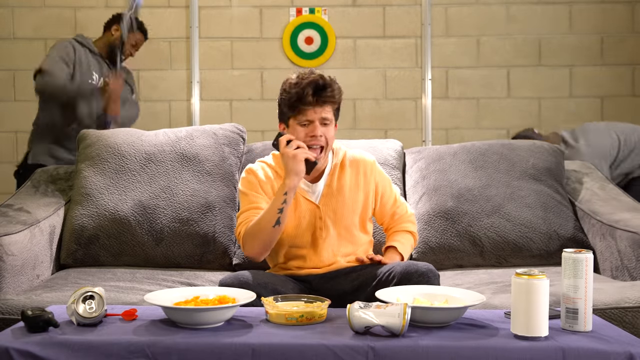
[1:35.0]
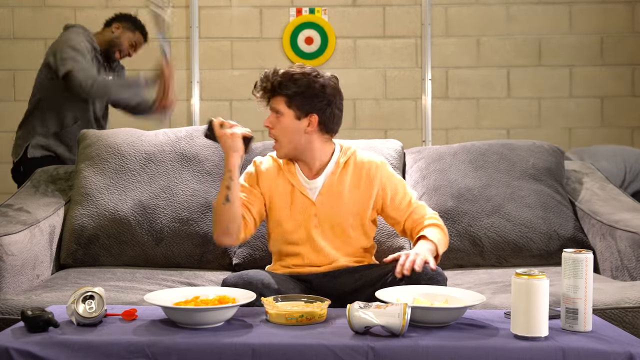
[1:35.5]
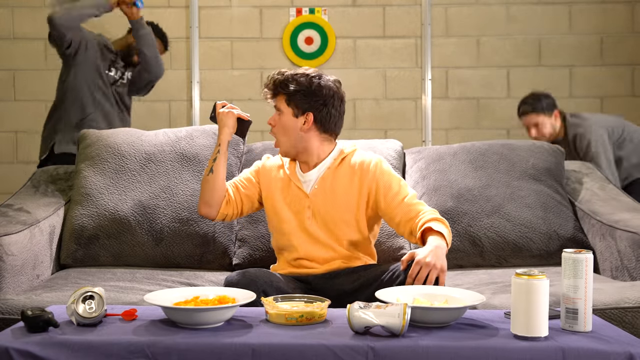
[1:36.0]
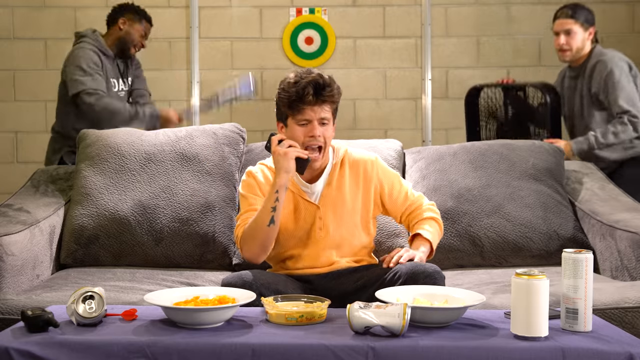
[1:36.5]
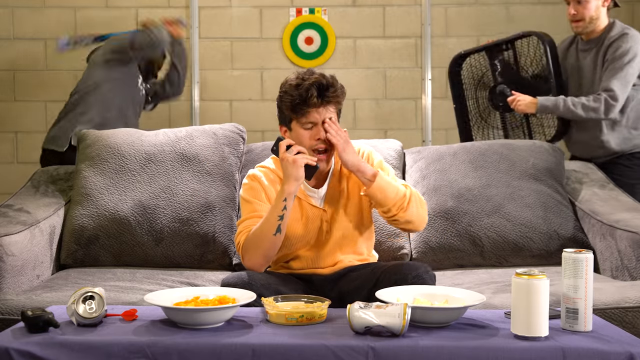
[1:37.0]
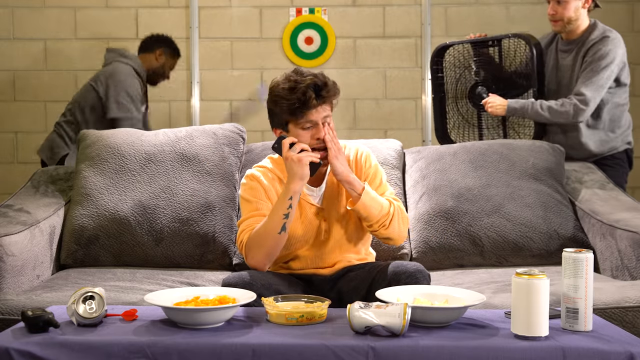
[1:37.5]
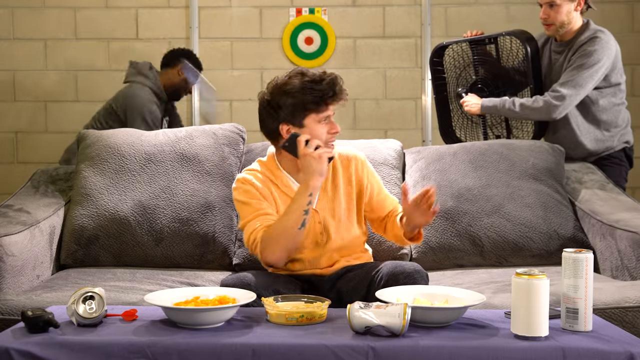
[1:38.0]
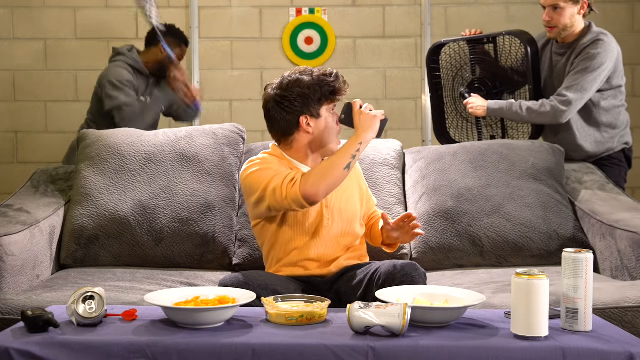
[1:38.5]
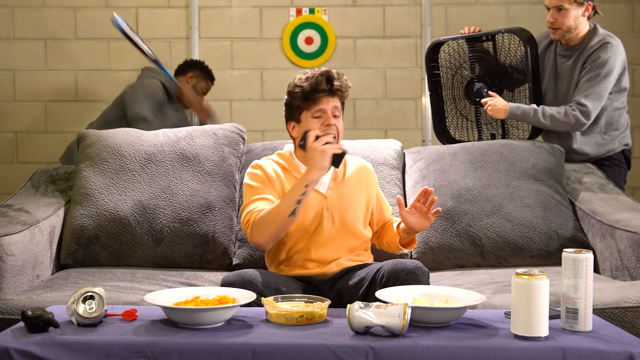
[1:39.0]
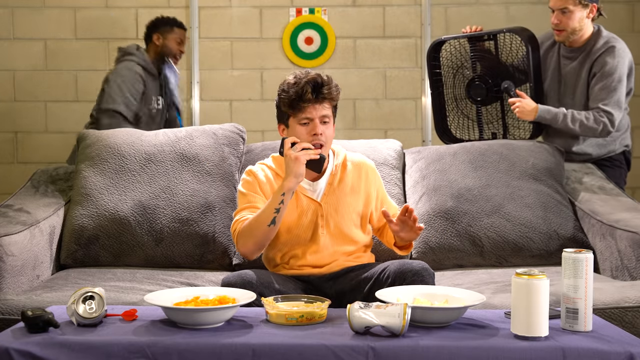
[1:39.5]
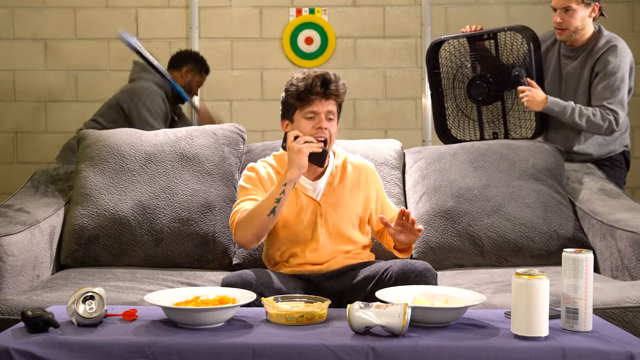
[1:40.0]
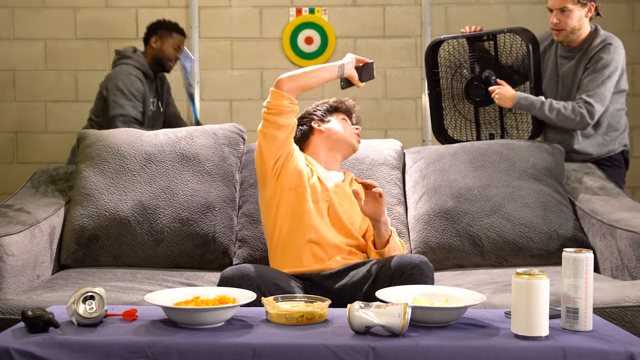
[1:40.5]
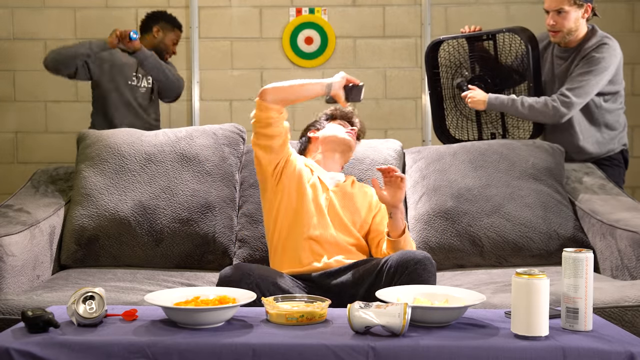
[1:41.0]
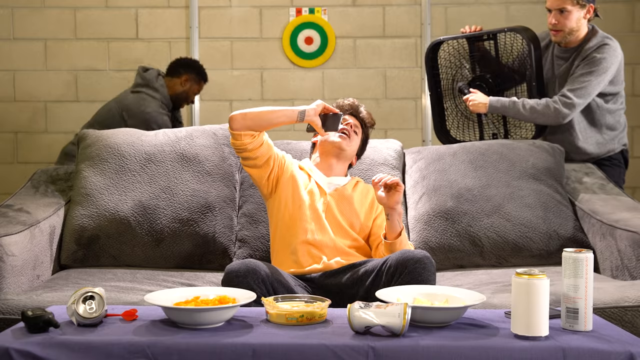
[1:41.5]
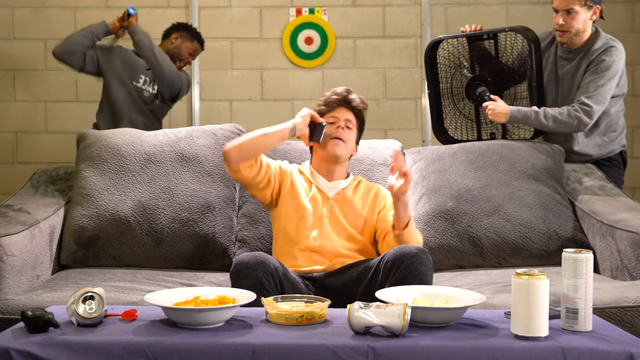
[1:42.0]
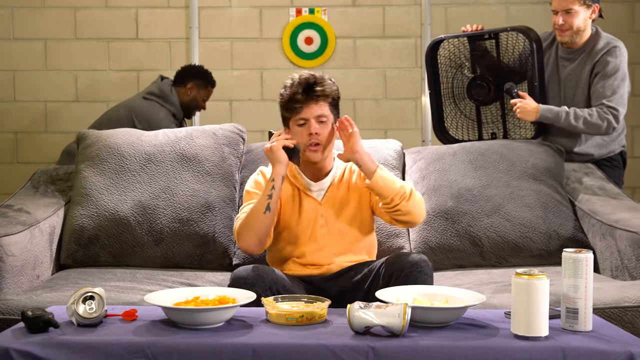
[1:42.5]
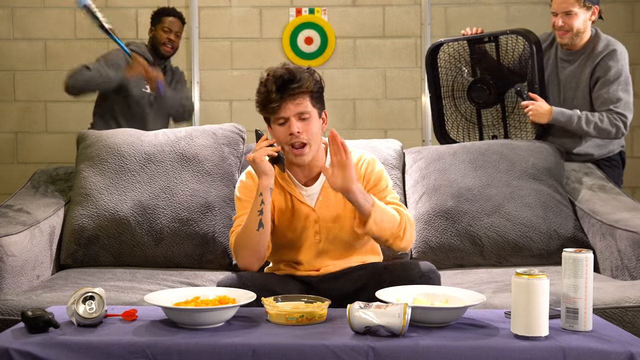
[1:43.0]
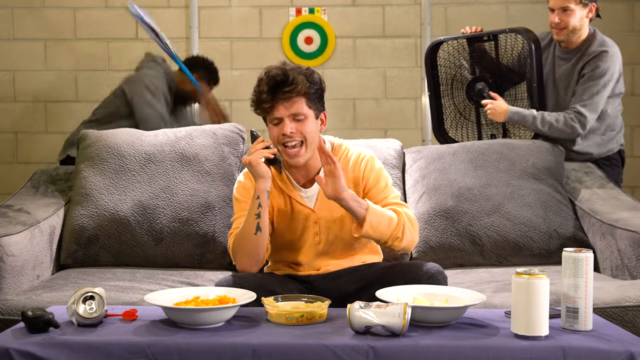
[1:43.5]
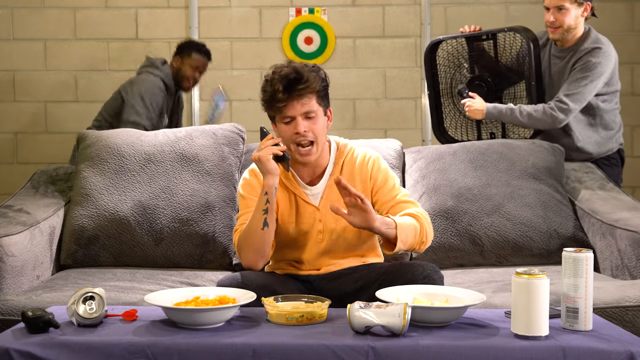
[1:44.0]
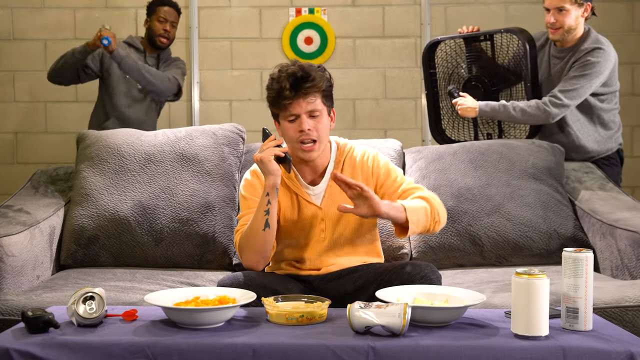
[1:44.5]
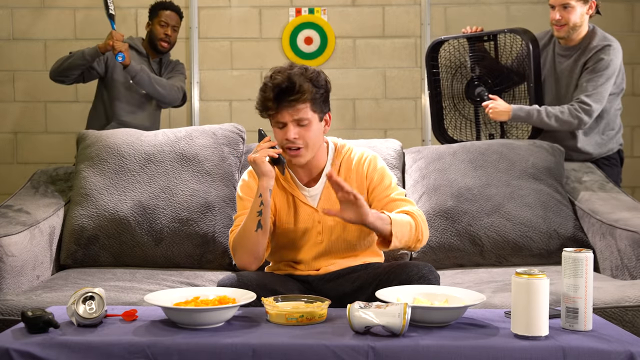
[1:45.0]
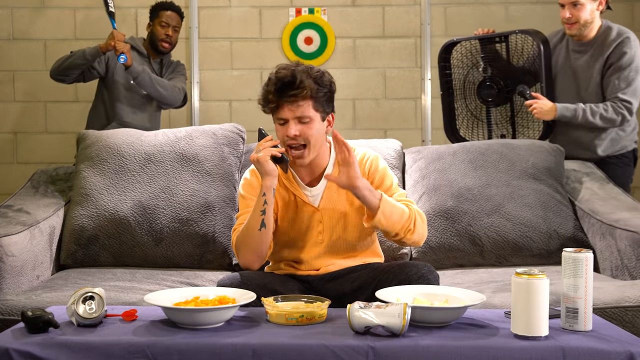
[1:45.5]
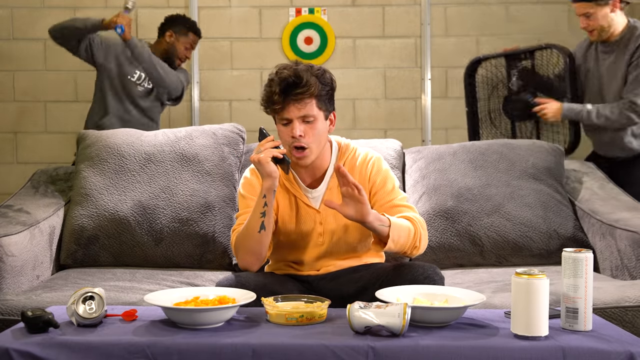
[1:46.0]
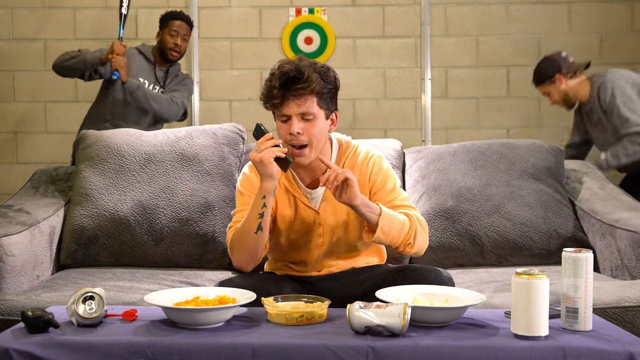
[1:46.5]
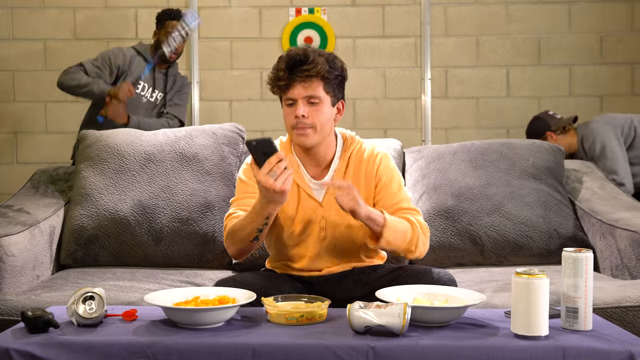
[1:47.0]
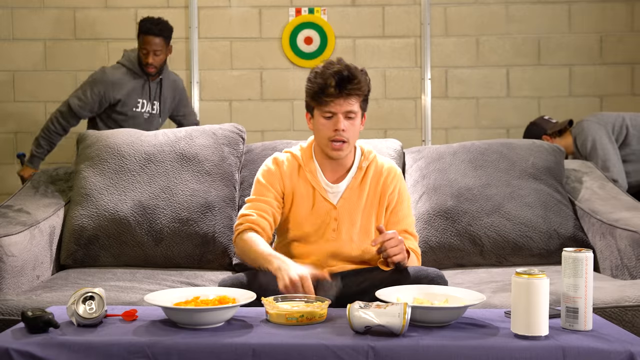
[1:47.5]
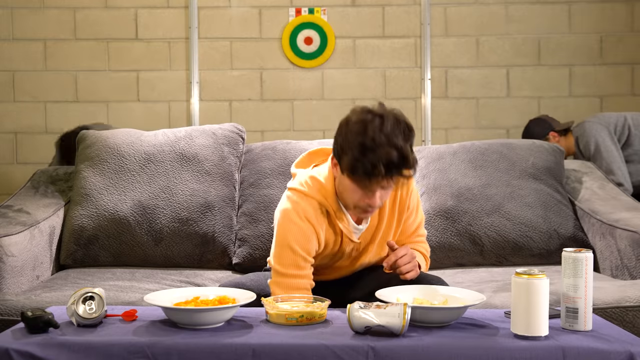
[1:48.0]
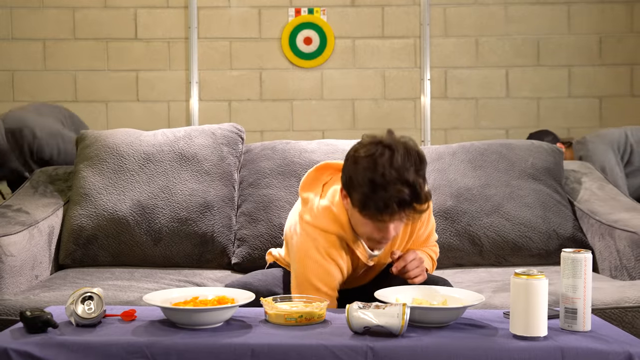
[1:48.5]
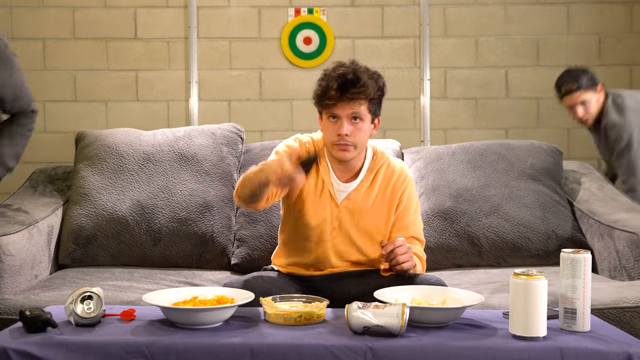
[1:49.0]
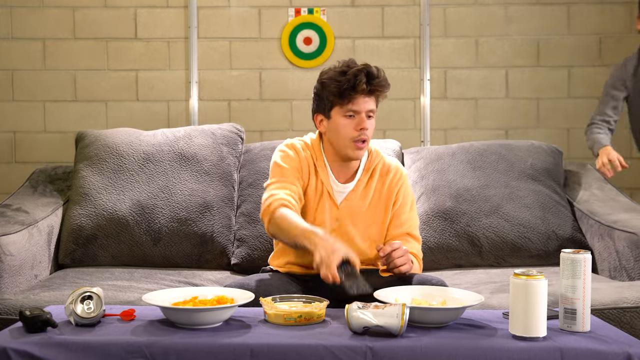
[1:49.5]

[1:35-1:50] The man in the back now has the baseball bat and repeatedly slams it down into the garbage can, which is on the ground and out of view, hitting it at least a dozen times. The man on the right has picked up a black fan that is plugged in and blowing air. He holds some type of contraption with a wire in front of the fan that looks like it is making some kind of noise, and looks carefully at the man on the phone as he does it. The man on the phone keeps talking, and at one point holds the phone up almost as if he wants the other person to hear what is going on. At the very end, he appears to hang up and sets the phone down, and the two men in the back start to run around to the other side of the couch to sit back down. The man turns the TV on again with the remote and sets that down as well.